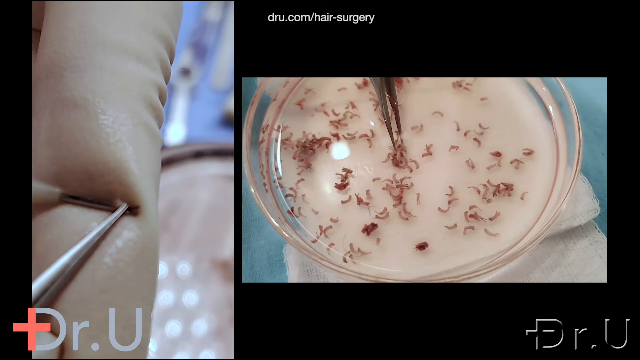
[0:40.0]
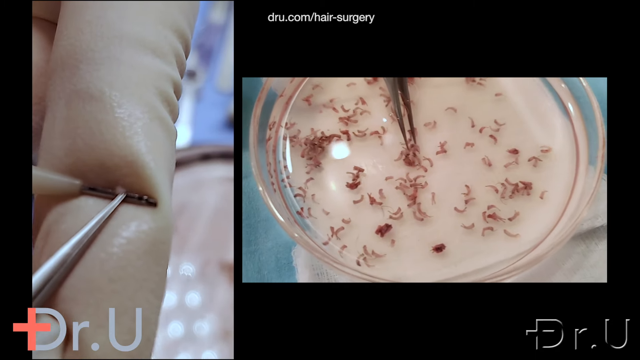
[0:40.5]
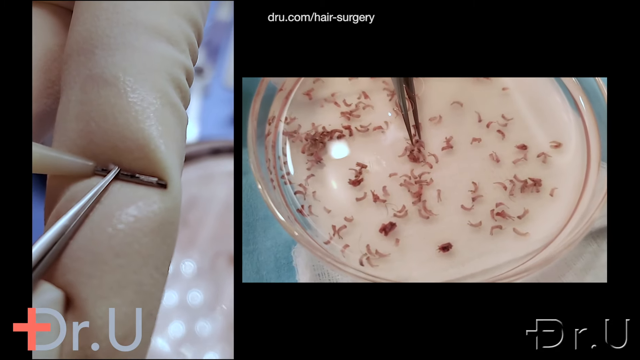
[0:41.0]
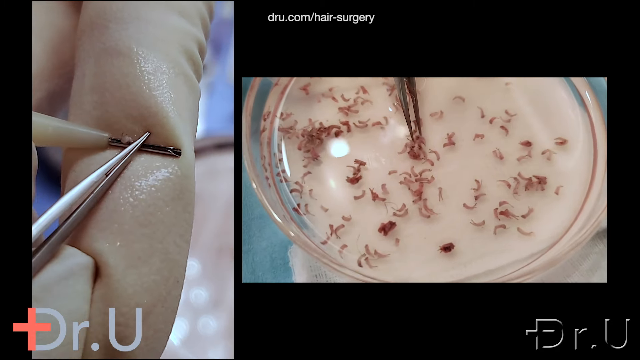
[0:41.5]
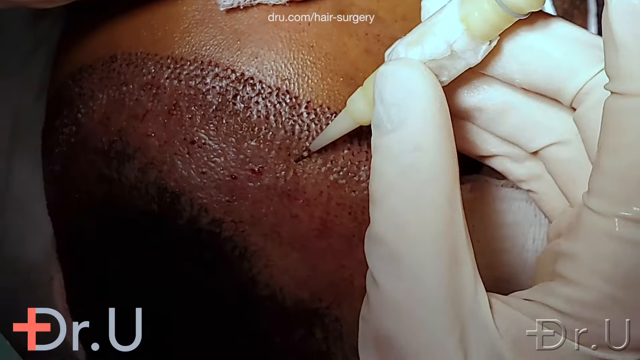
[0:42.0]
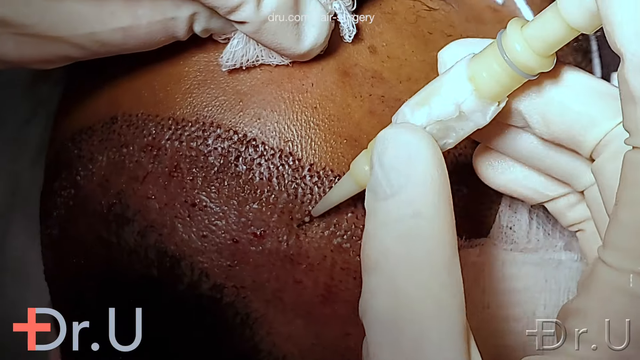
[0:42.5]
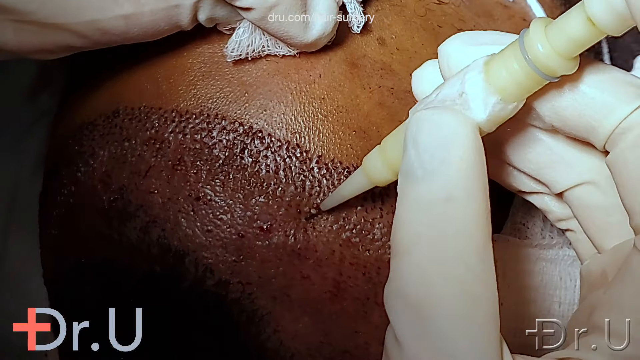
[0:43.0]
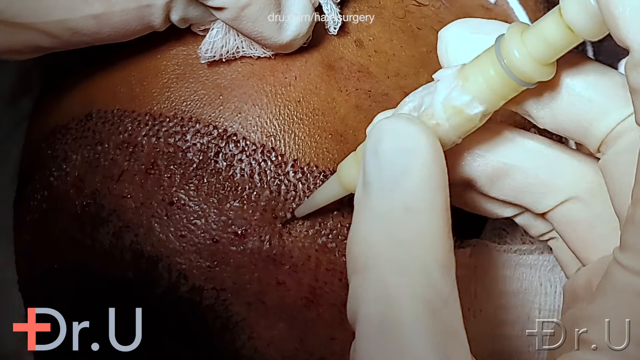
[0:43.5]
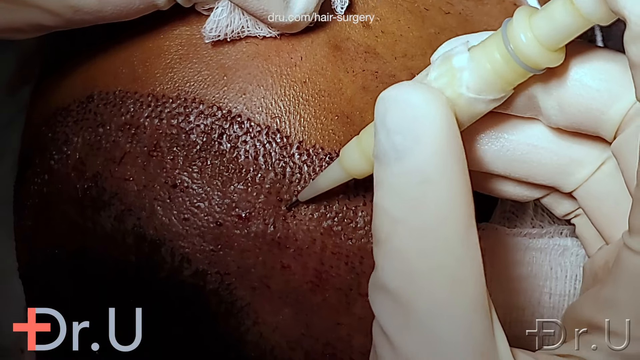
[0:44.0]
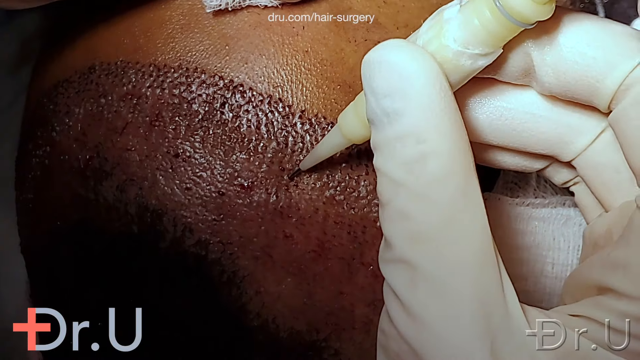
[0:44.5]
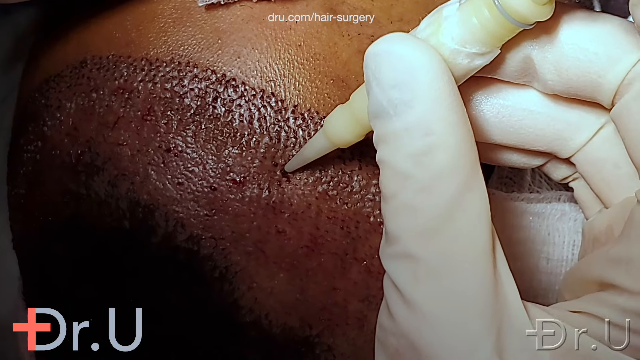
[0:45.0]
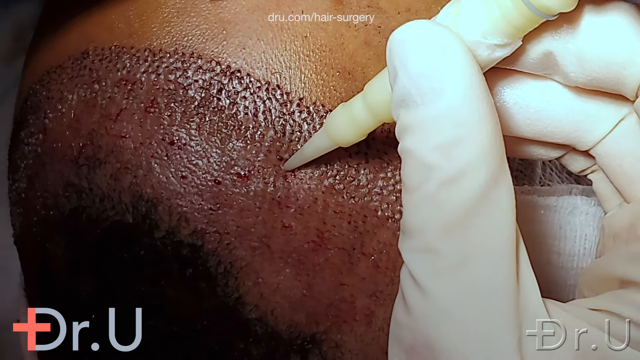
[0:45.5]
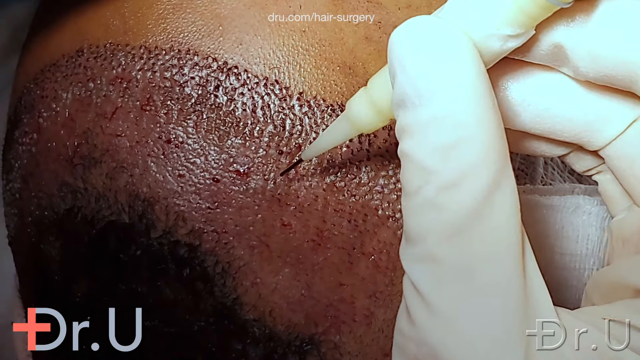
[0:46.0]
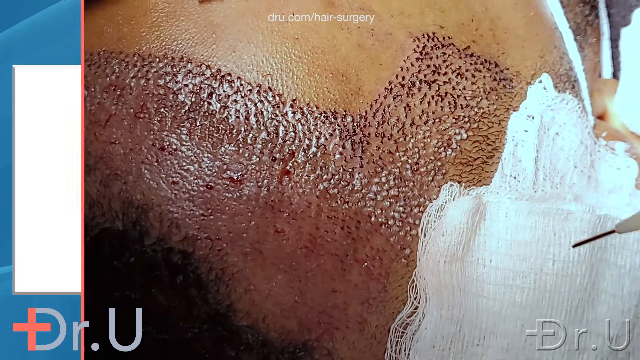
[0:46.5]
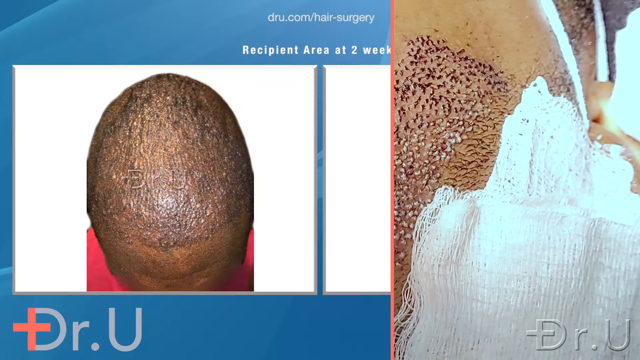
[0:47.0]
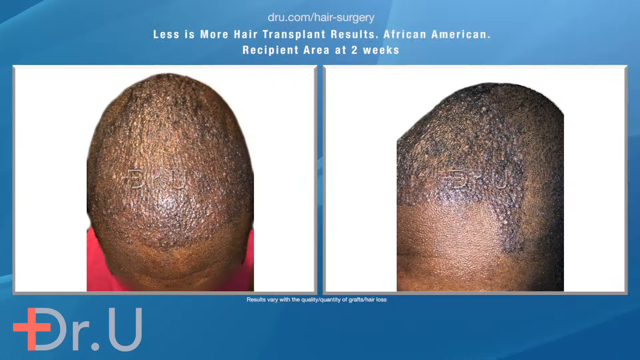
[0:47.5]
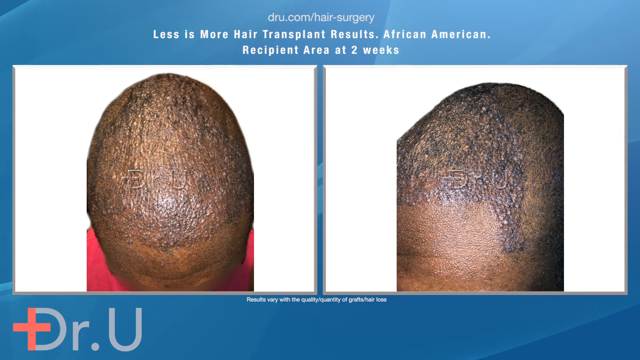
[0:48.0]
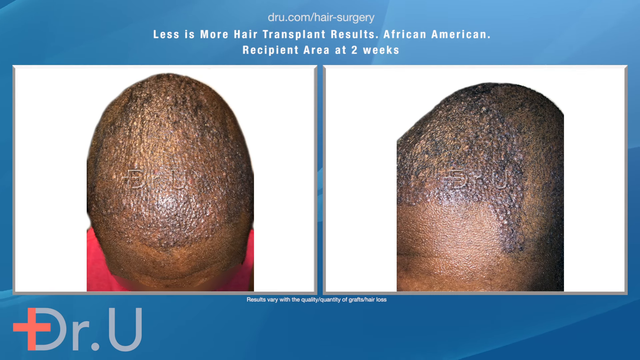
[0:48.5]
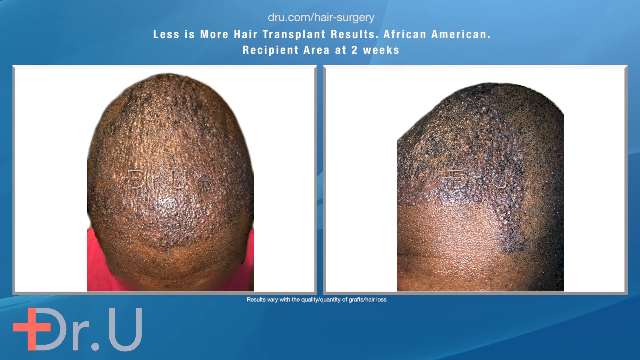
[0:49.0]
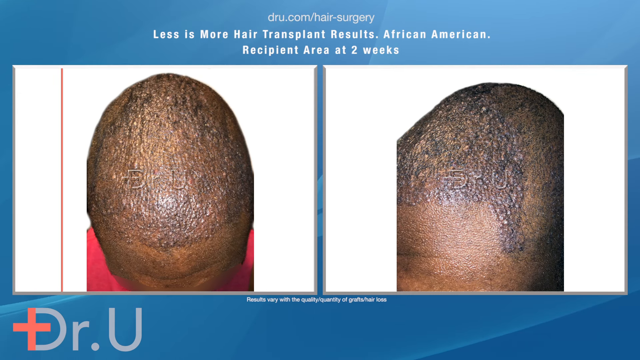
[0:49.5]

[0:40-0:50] A sequence of images for a hair transplant follows. The first screen shows two videos. On the right, what look like small hairs or hair follicles float in a petri dish while somebody picks them up with what looks like tweezers. On the left, something that looks like a hair is inserted into a device that looks like a needle. Next comes a close-up of someone's scalp as someone uses a similar needle-like device to puncture it. Side-by-side photographs of someone's head then appear, with text above them that says "Less is More Hair Transplant Results, African-American. Recipient Area at 2 Weeks." Another set of photos shows results at 11 weeks.